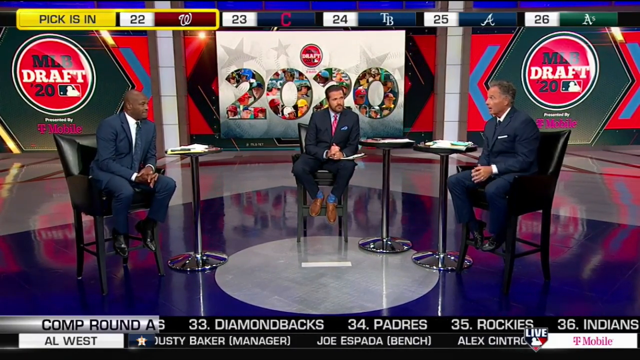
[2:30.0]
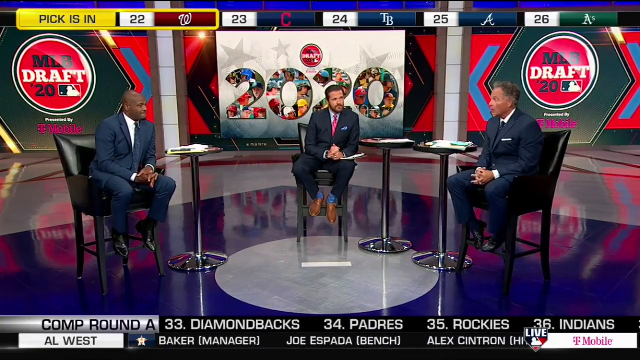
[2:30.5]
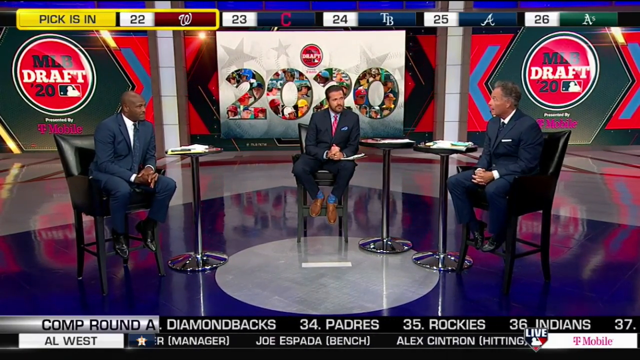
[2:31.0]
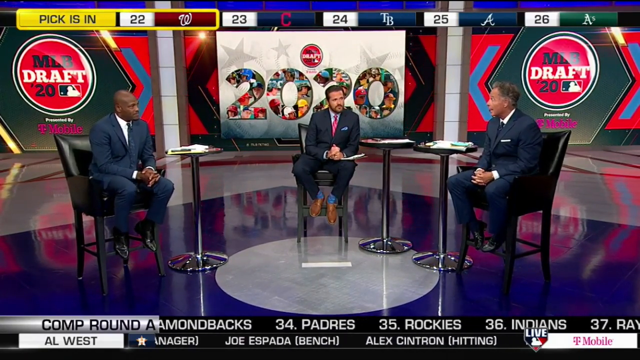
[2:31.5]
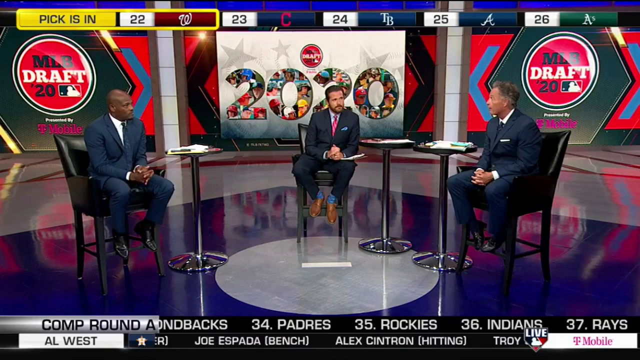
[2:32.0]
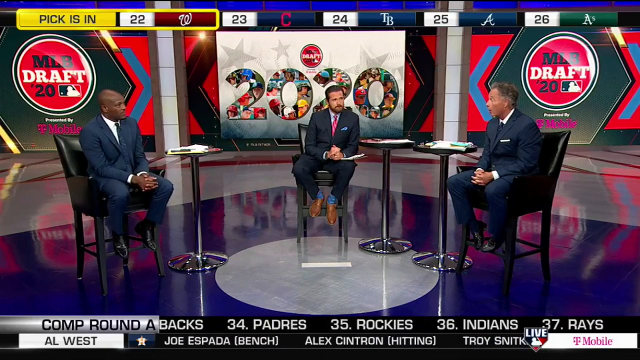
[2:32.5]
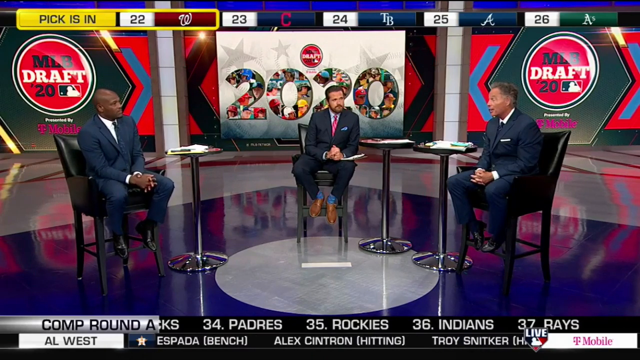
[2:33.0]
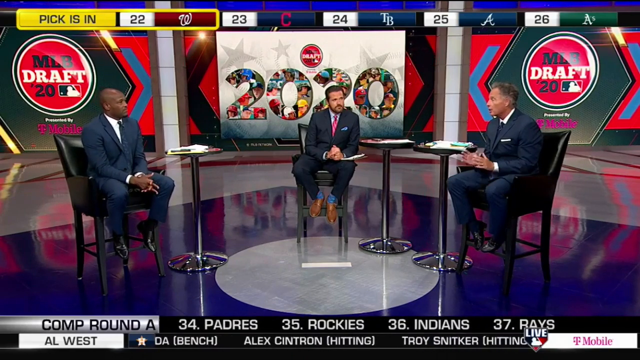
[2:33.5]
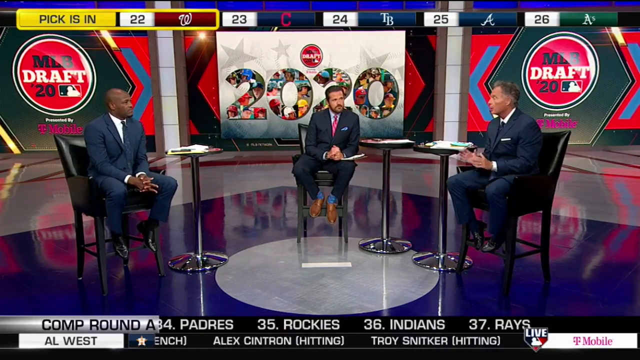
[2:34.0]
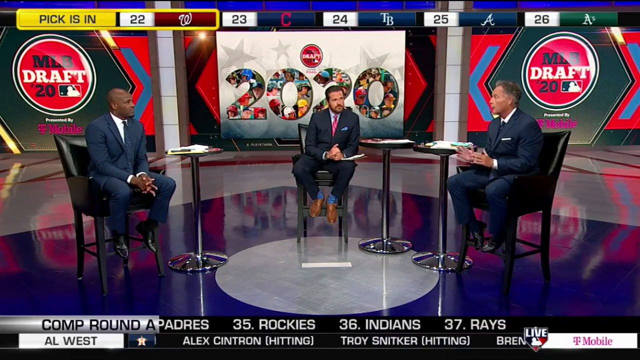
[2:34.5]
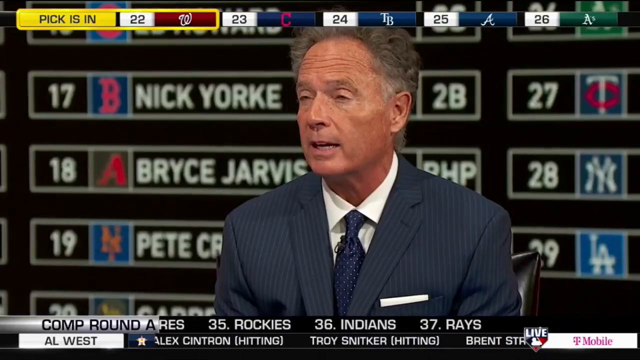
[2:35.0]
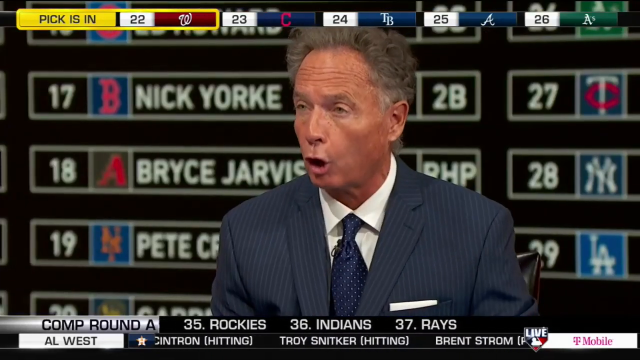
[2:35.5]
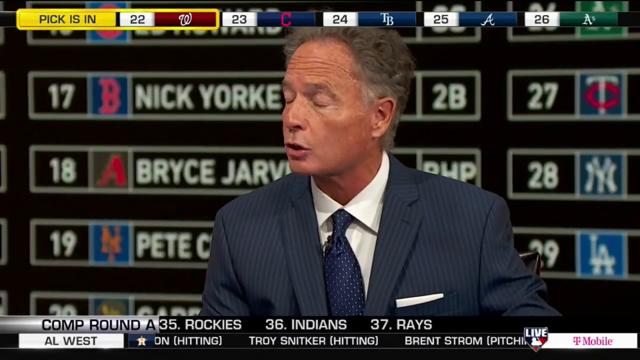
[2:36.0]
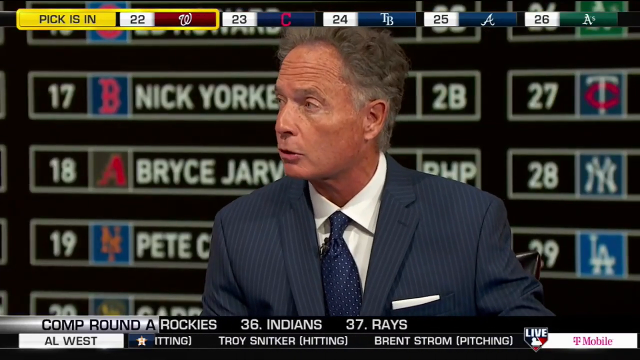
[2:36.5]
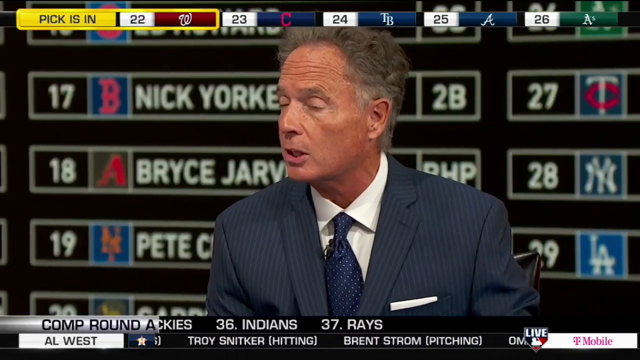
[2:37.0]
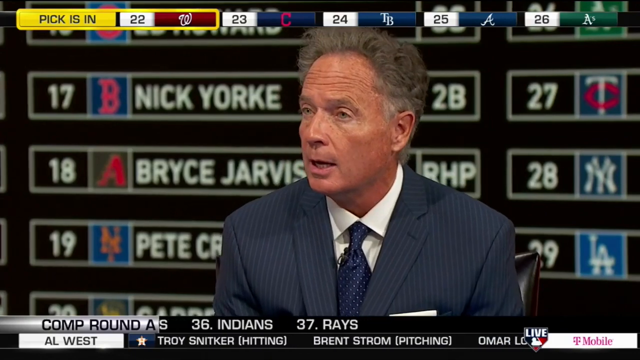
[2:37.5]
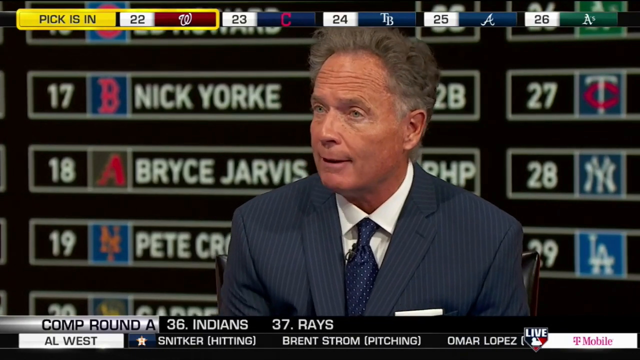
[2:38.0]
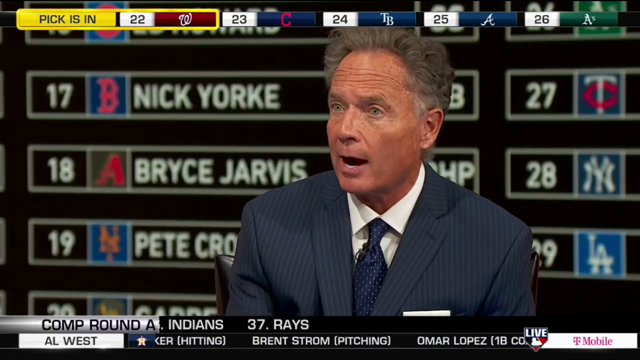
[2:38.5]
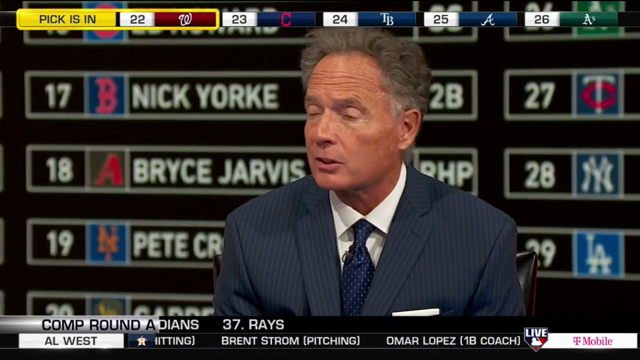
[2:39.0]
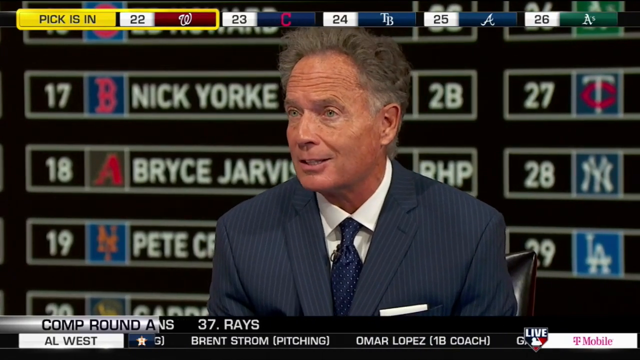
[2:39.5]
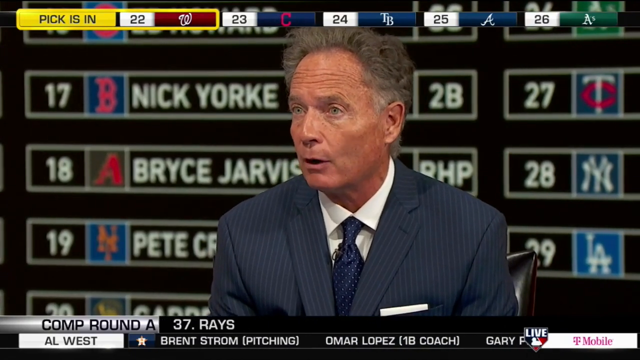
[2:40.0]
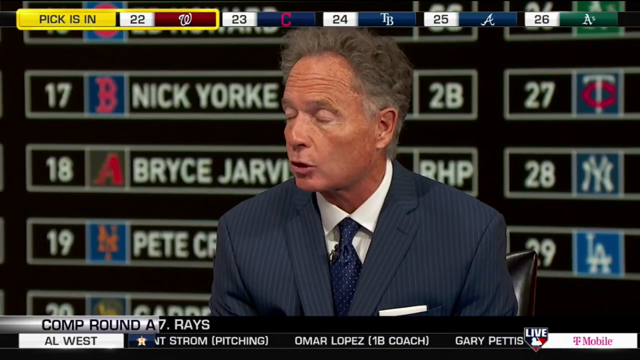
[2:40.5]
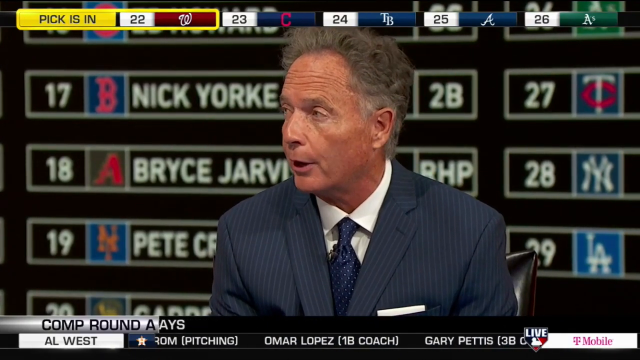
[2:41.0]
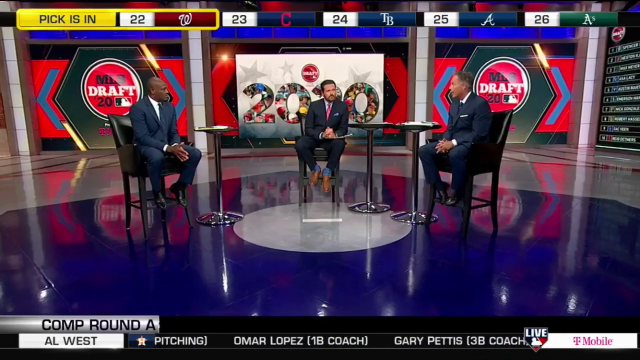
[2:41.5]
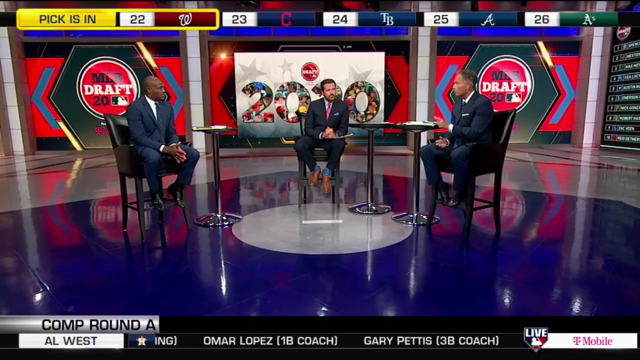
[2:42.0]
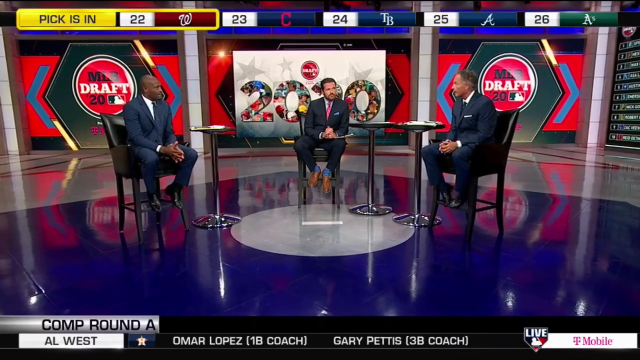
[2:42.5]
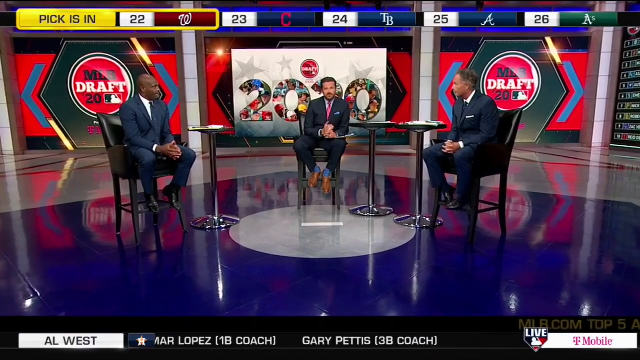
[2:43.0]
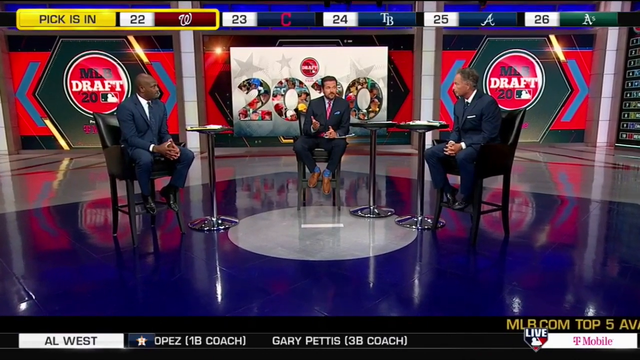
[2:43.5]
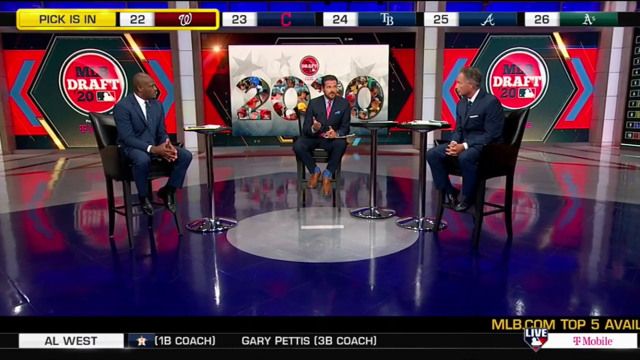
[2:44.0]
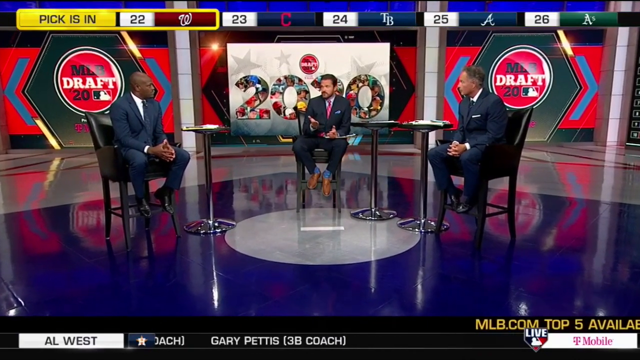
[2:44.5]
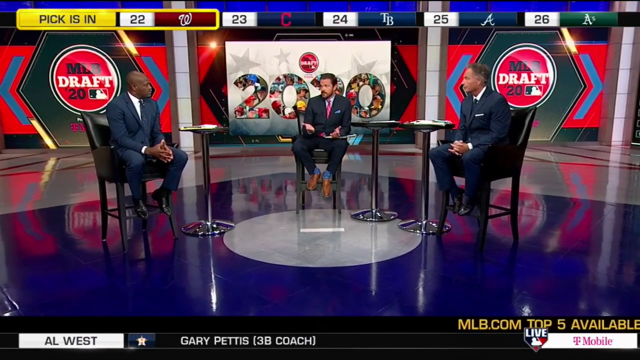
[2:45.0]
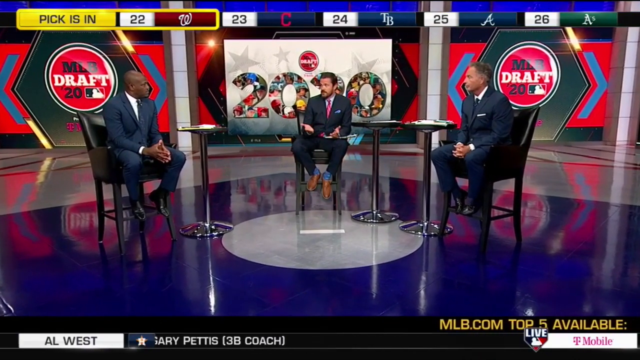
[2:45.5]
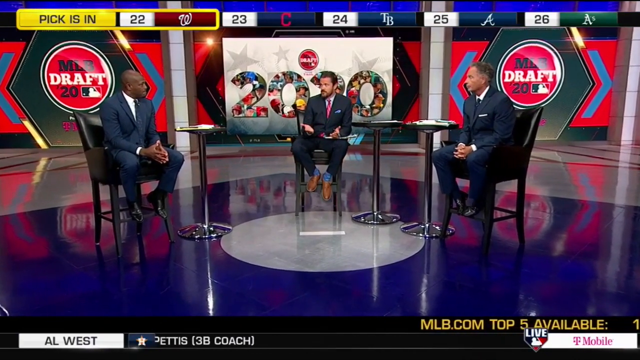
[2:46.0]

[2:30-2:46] The three men continue their discussion in the studio as the gray-haired man on the right side of the screen gestures with both hands. Reflections of the MLB draft logos are visible on the shiny floor. The discussion is animated, and all three men lean in toward each other. The man on the left has his hands clasped in a prayer-like gesture with fingers extended, while the man on the right has his hands clasped with his fingers grasping his fists. The video cuts to the gray-haired man with the screen of black team names and player names behind him; he gestures toward the camera with his right hand as he speaks, nodding slightly, the corner of his mouth slightly upturned. It cuts back to all three men, and the man in the center holds his palms up as if questioning something that was said. A blue arrow slides from the left to the right side of the screen as the show transitions to the MLB Network logo.